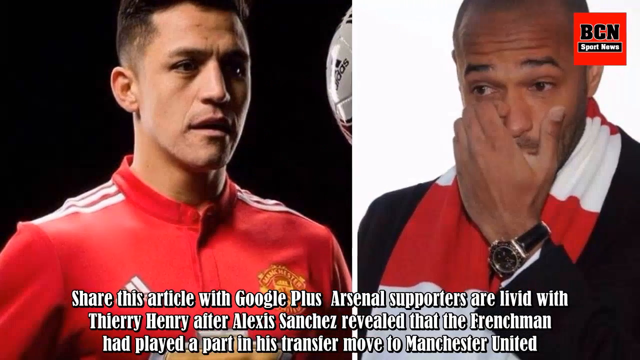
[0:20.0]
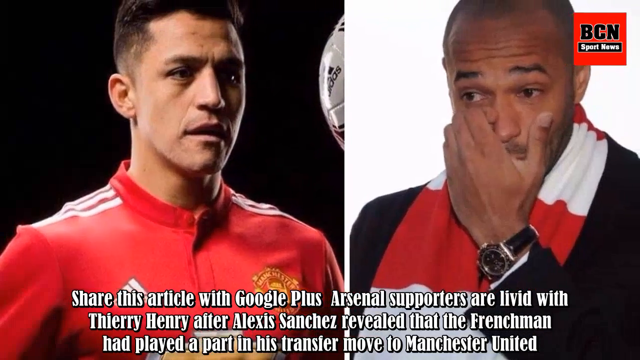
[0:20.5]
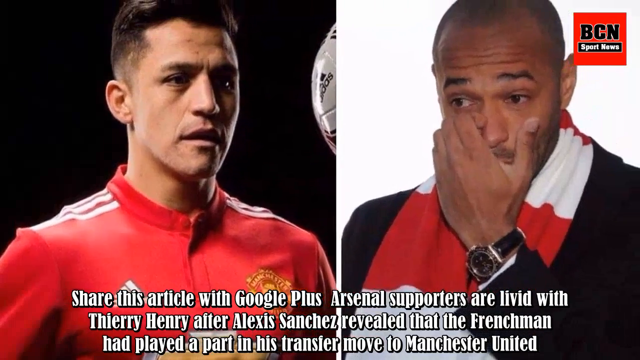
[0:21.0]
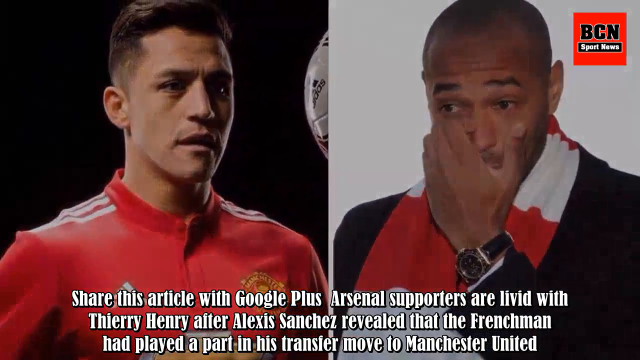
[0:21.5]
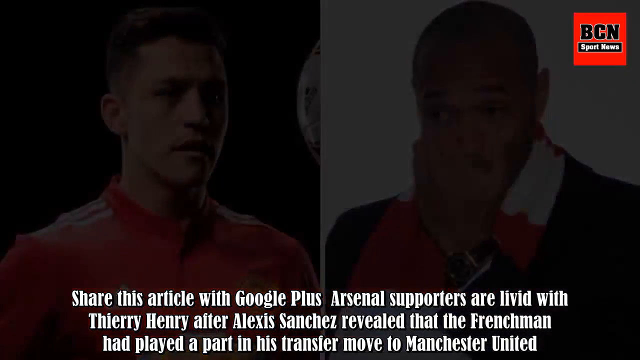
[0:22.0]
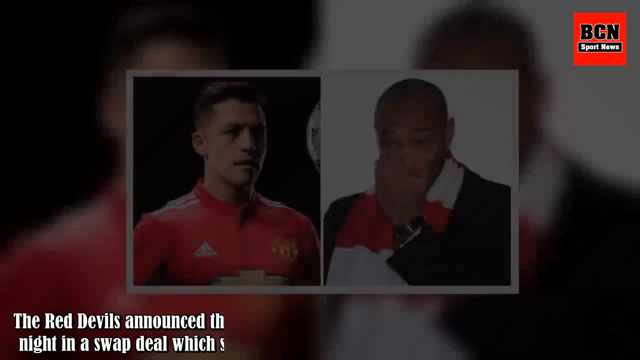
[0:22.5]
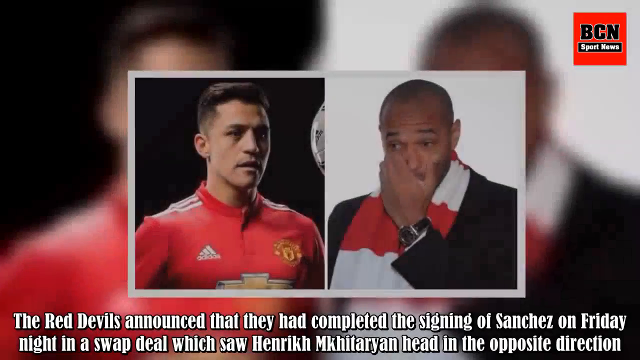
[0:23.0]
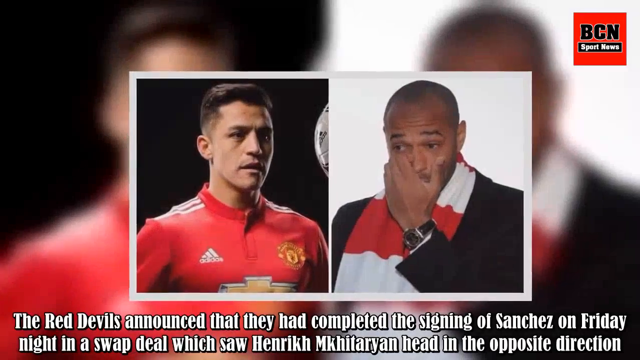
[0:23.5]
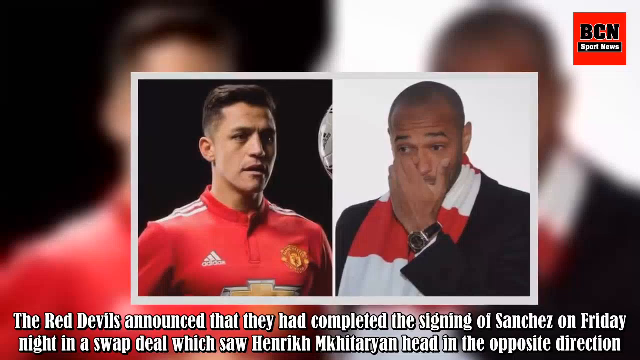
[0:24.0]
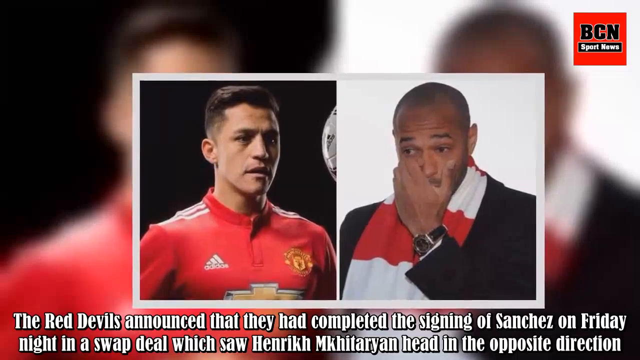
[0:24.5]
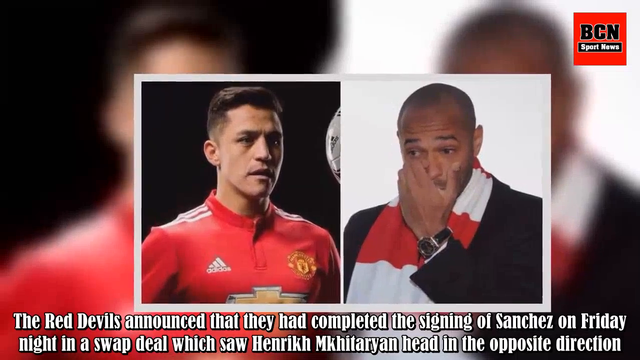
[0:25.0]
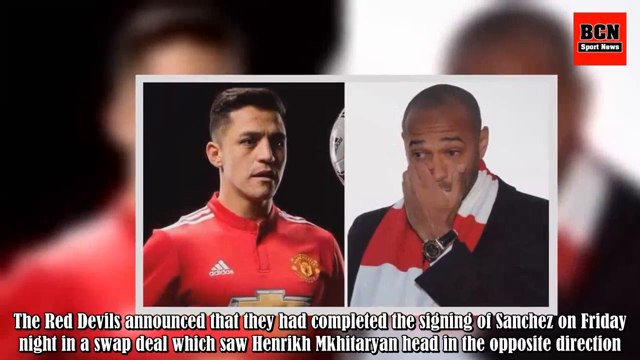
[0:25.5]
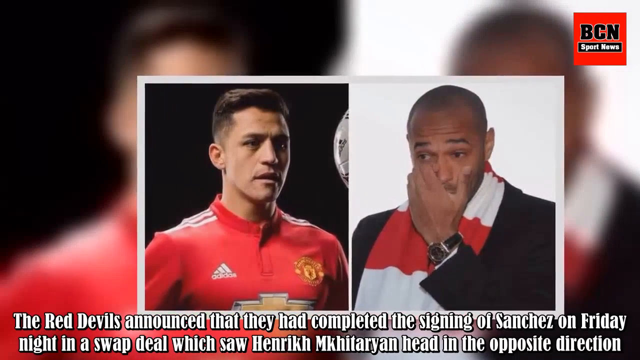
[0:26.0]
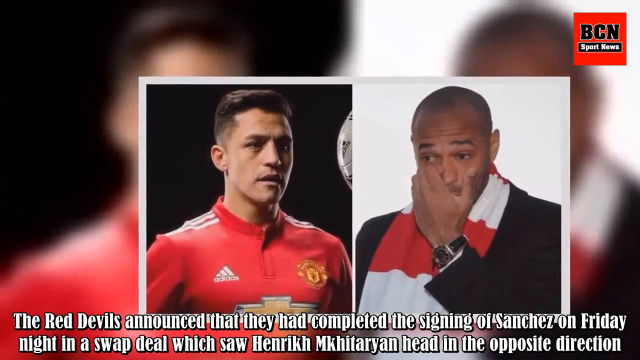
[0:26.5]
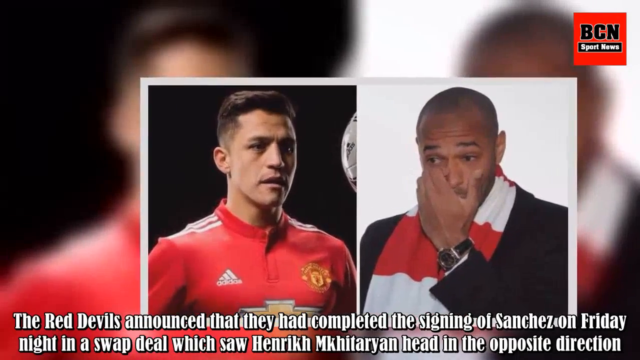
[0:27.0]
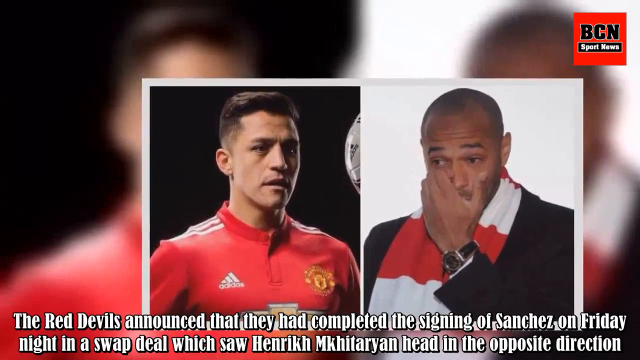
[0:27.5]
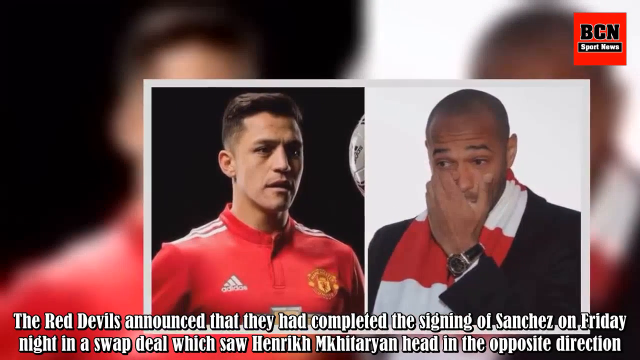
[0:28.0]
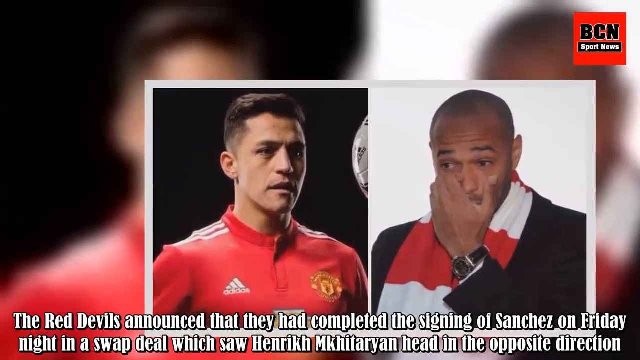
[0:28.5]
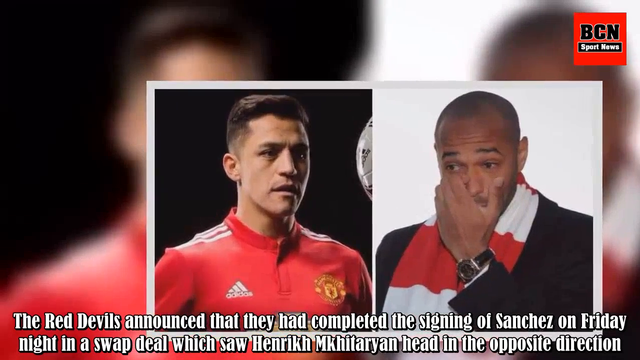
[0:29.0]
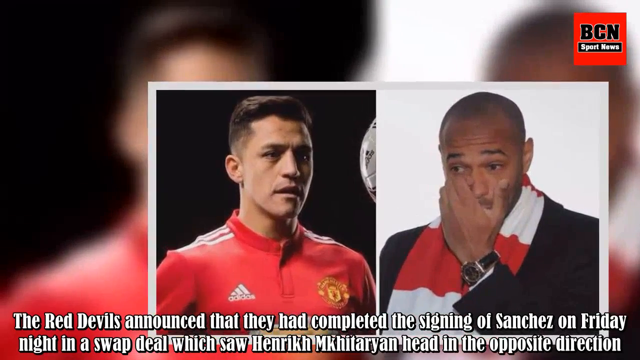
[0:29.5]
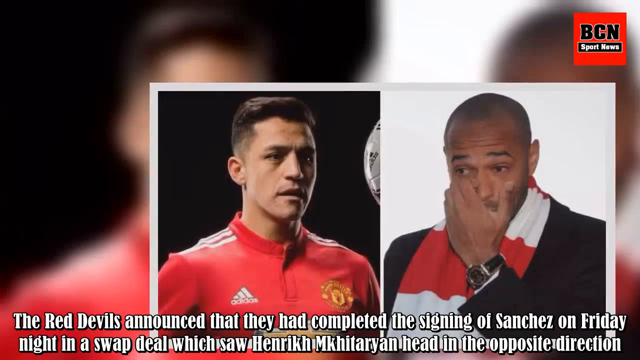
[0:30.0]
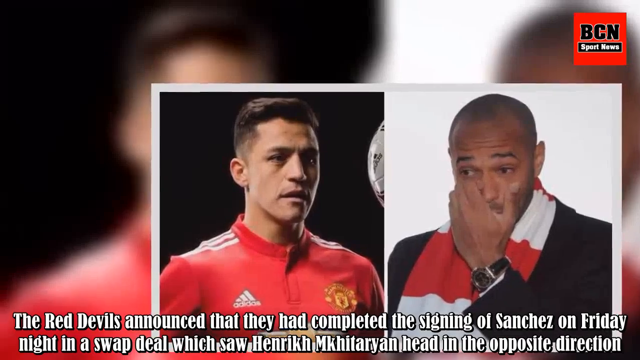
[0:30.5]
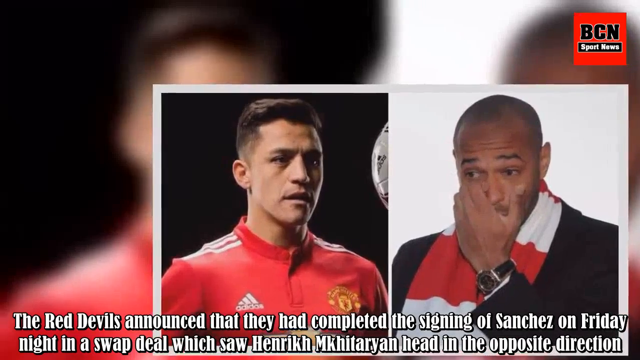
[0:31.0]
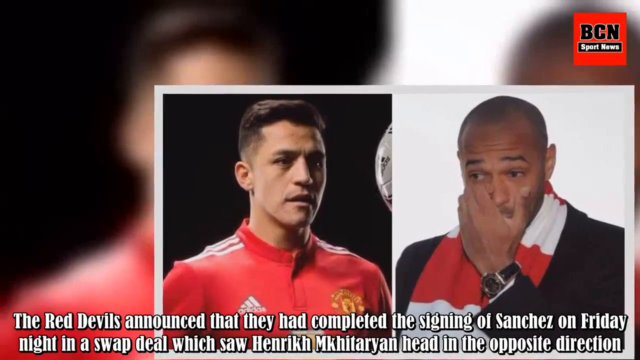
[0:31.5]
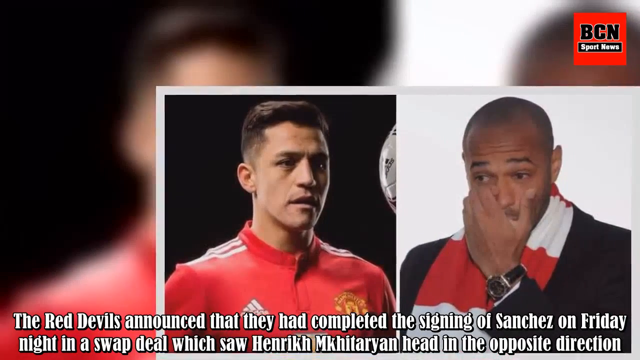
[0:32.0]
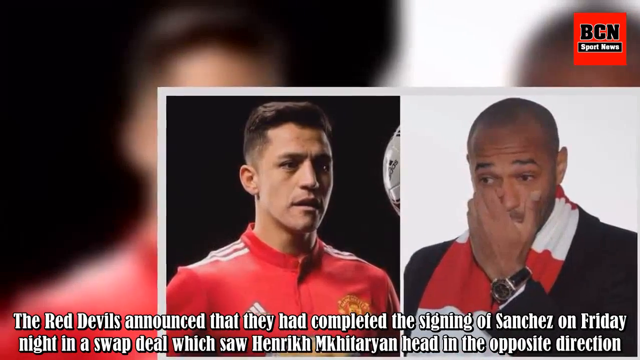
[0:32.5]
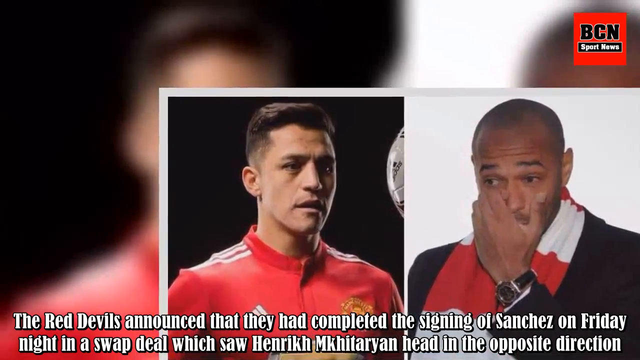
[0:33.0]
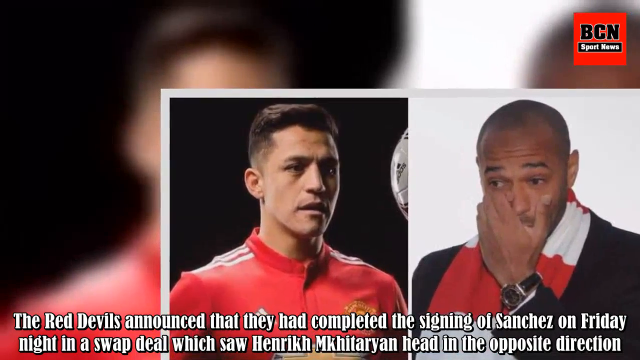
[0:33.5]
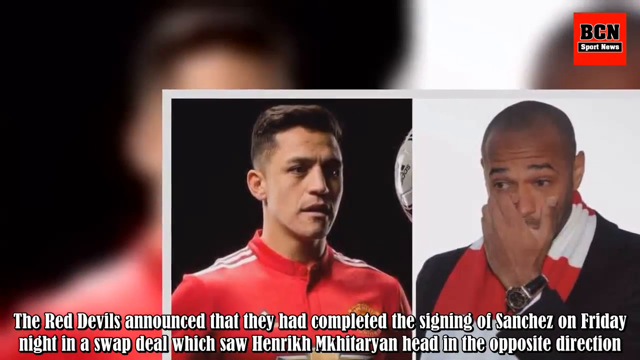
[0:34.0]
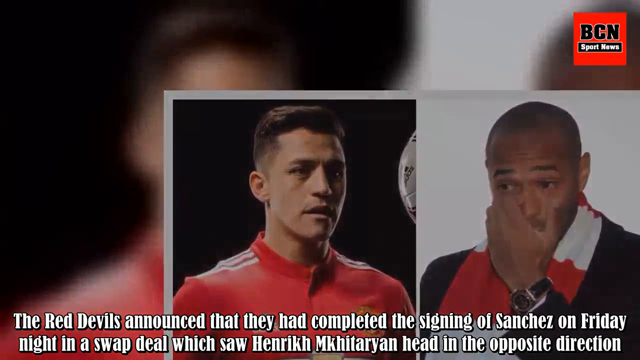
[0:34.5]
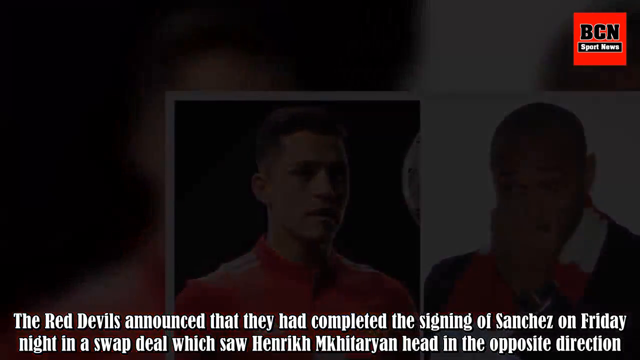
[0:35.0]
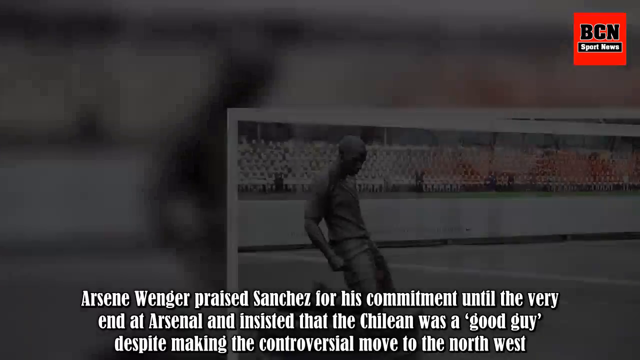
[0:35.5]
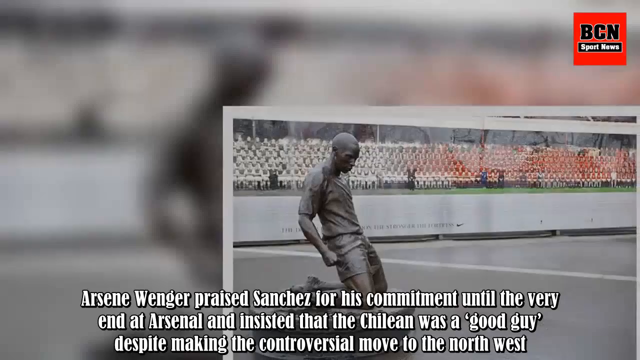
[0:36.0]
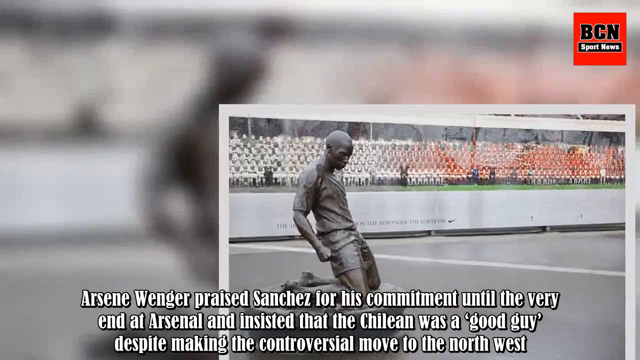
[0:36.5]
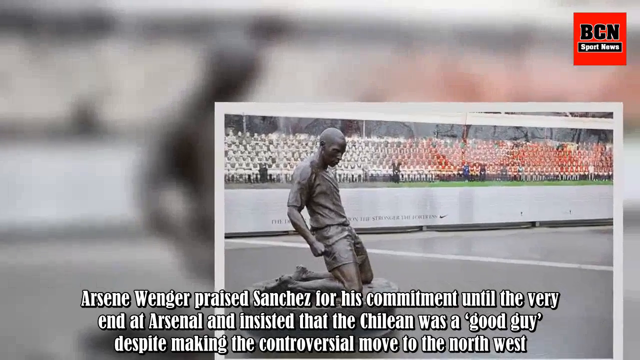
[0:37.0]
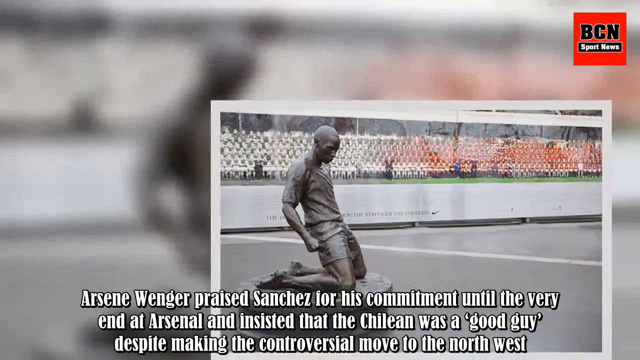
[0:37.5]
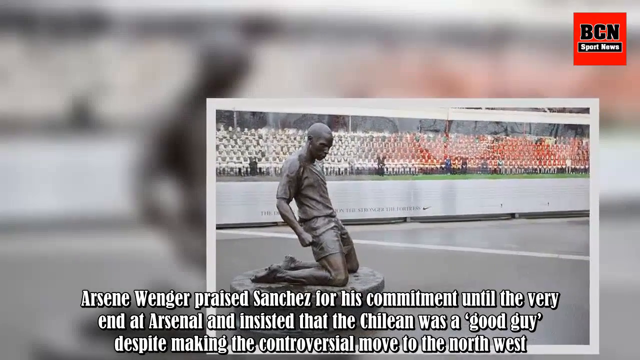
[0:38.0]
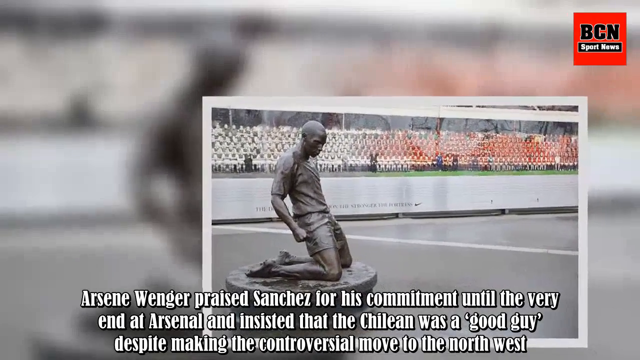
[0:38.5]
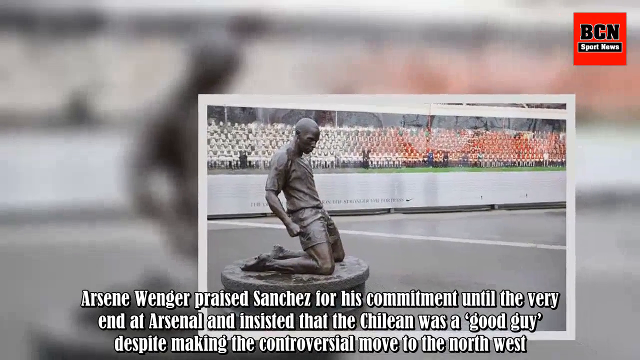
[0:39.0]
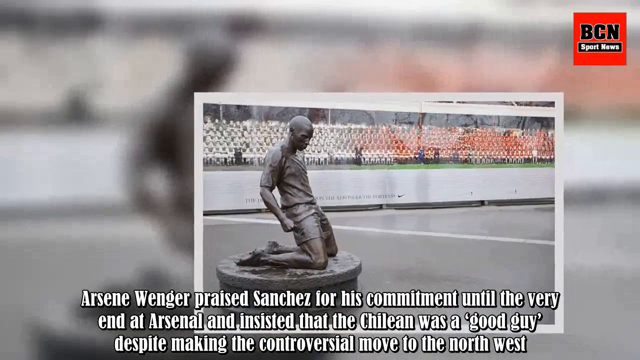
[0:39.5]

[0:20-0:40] The images of the two men remain on screen with text that reads "The Red Devils announced that they had completed the signing of Sanchez on Friday night", followed by more text praising Sanchez for his commitment. It seems to be about a team signing, or maybe buying, a new player. The white man in the red Manchester jersey looks to be between 30 and 35 years old. The Black man, who looks like he could be between 35 and 40, wears a watch and a black jacket.